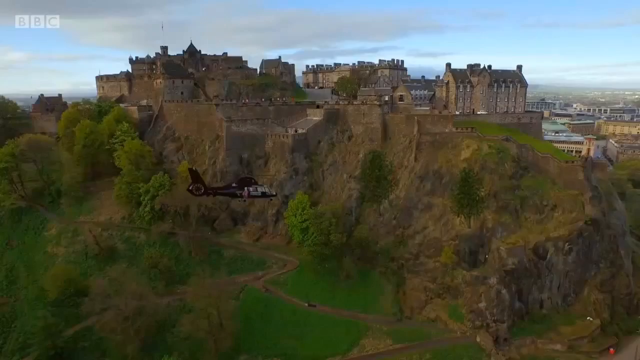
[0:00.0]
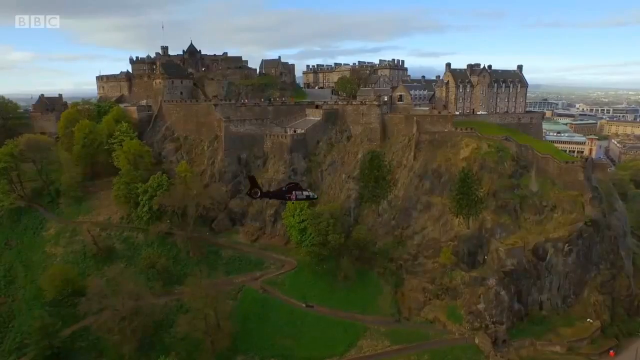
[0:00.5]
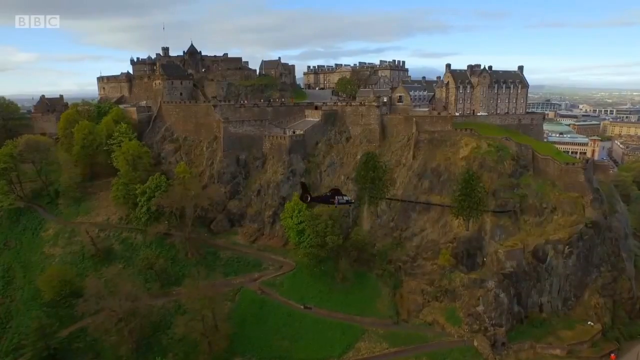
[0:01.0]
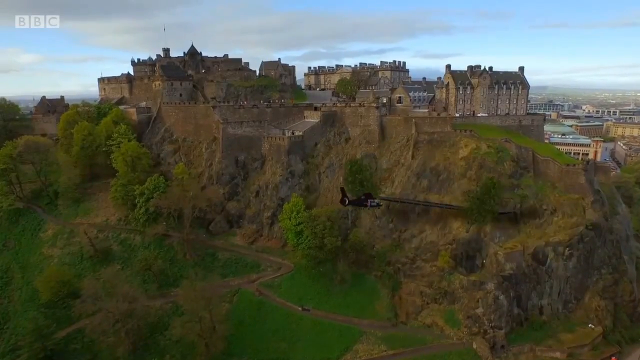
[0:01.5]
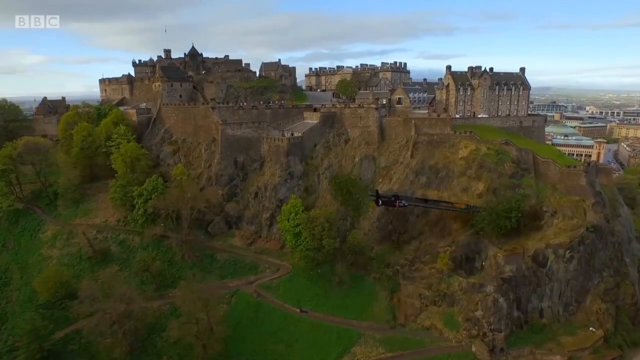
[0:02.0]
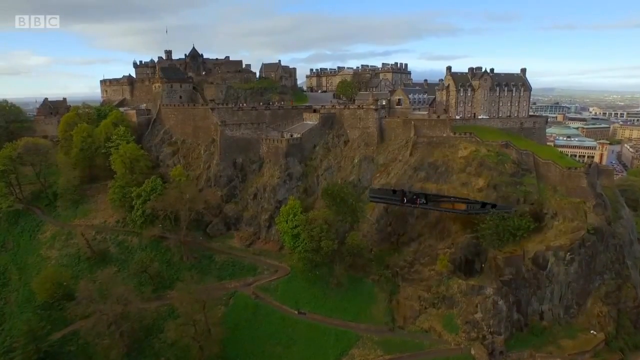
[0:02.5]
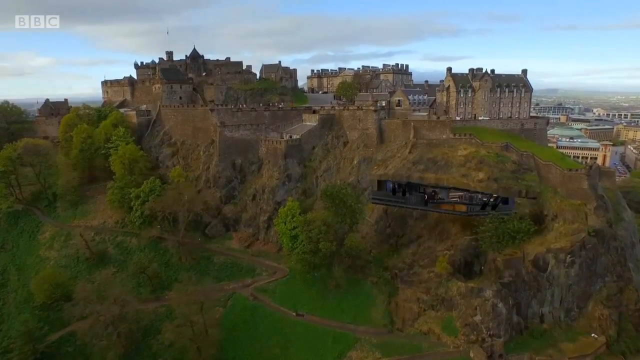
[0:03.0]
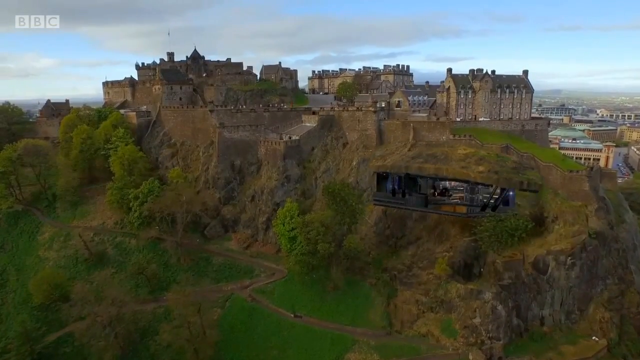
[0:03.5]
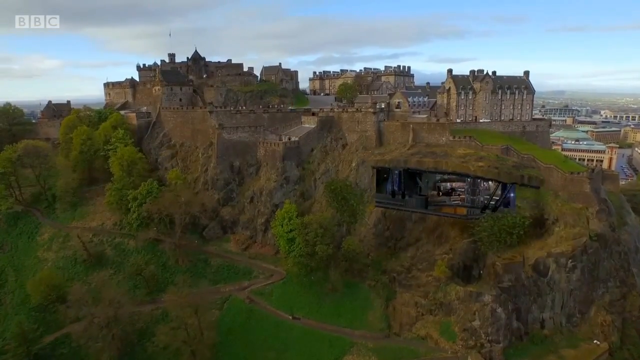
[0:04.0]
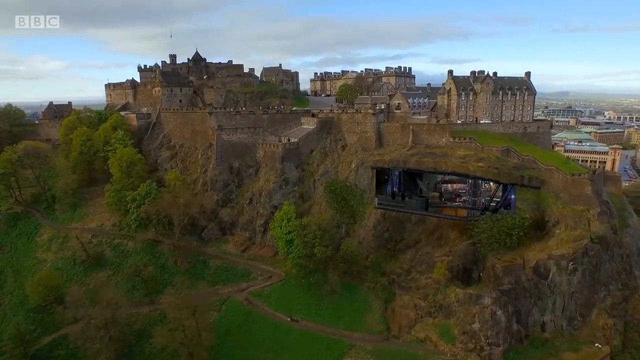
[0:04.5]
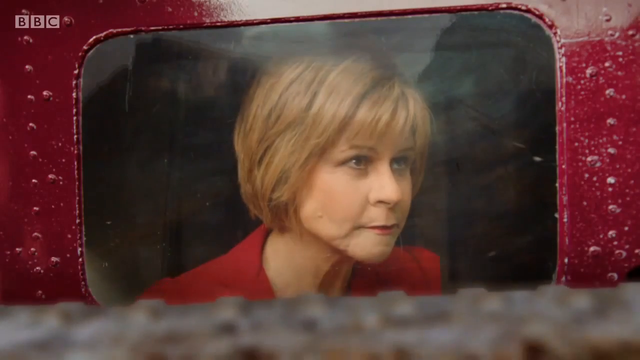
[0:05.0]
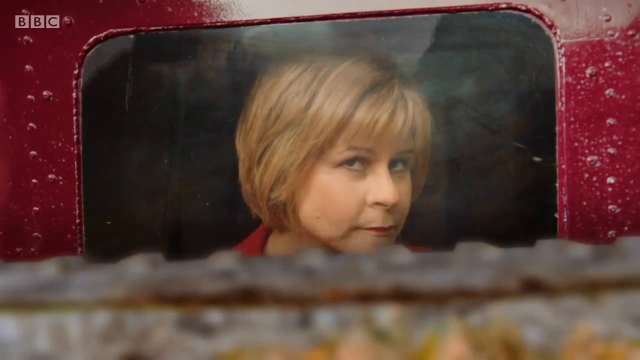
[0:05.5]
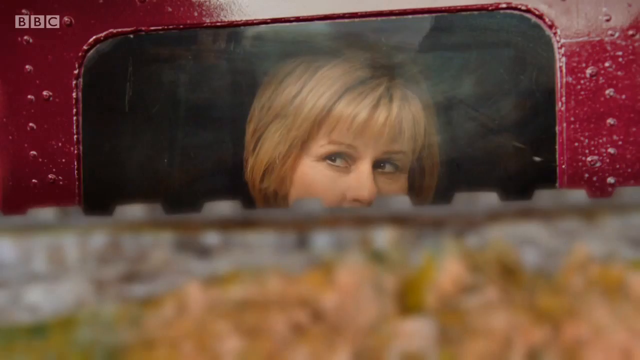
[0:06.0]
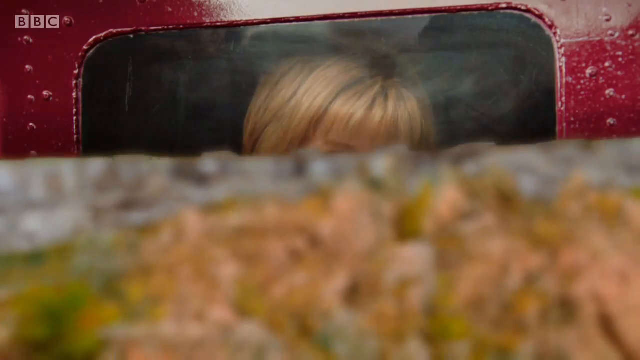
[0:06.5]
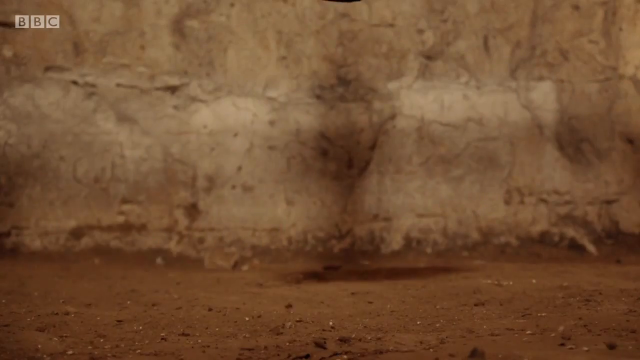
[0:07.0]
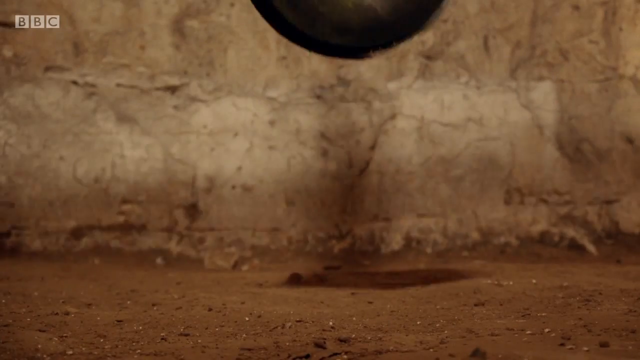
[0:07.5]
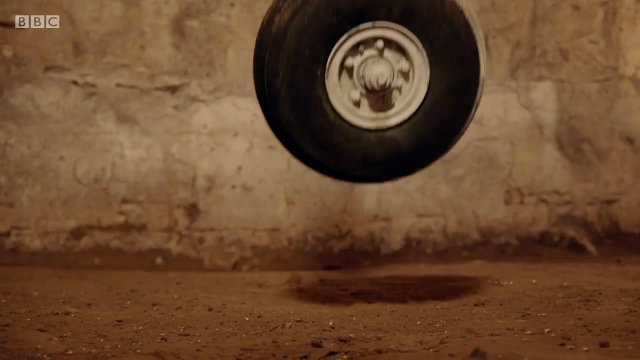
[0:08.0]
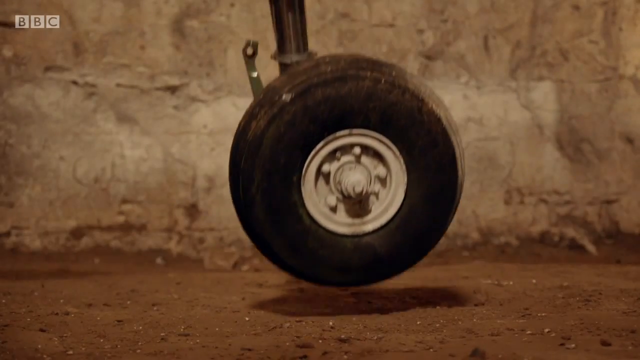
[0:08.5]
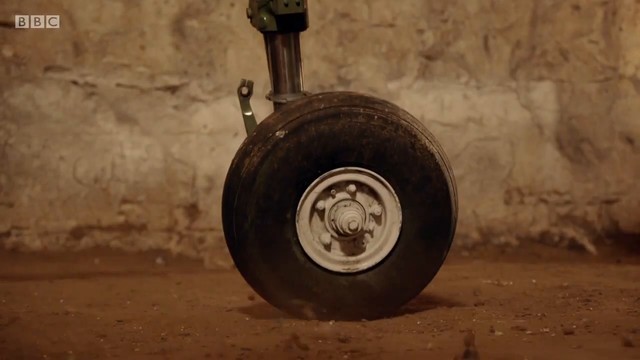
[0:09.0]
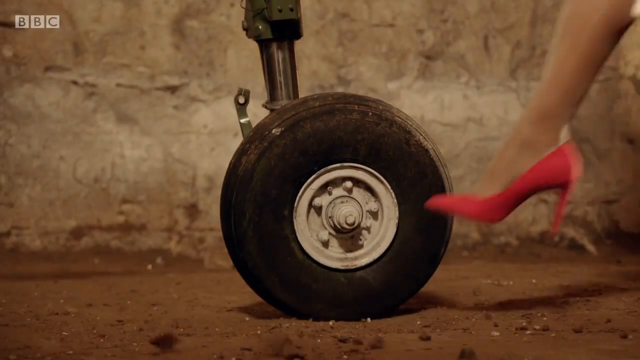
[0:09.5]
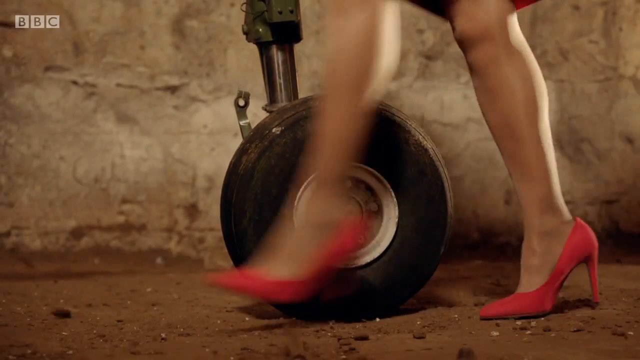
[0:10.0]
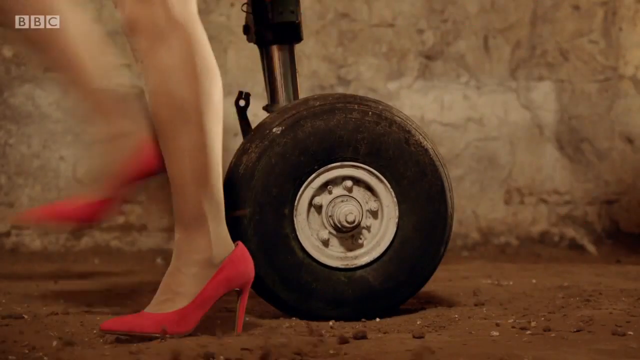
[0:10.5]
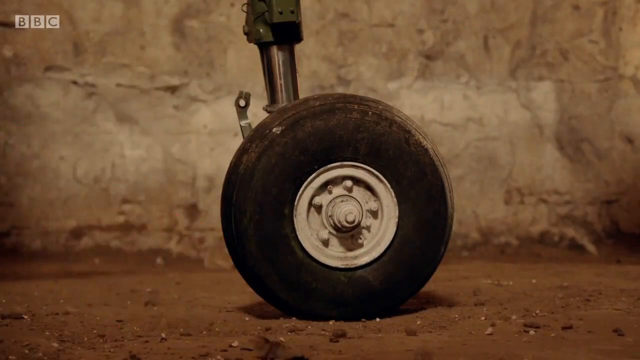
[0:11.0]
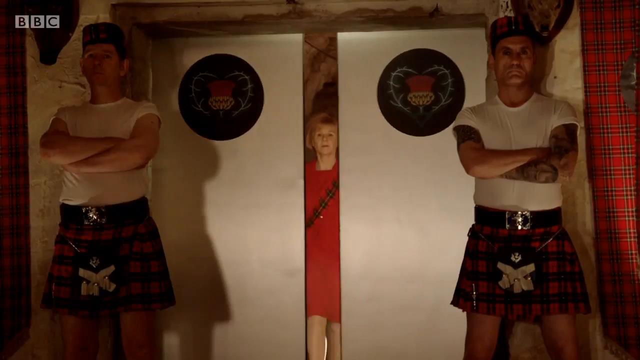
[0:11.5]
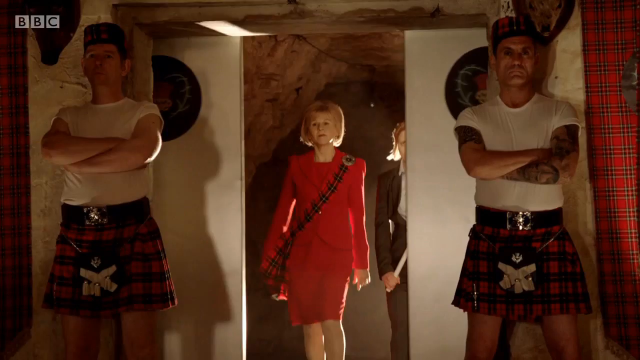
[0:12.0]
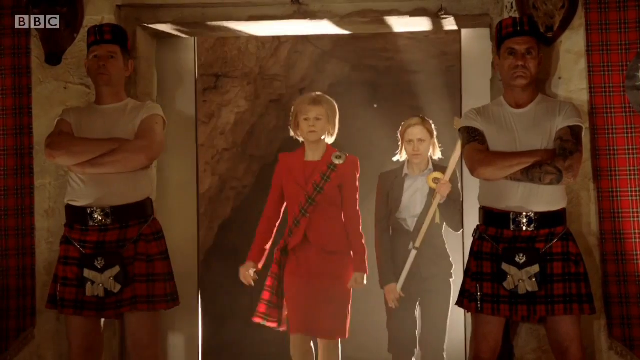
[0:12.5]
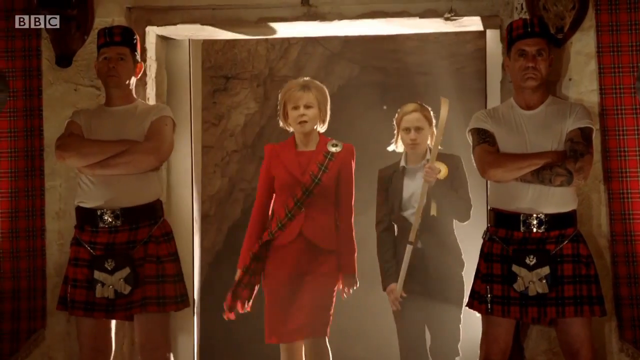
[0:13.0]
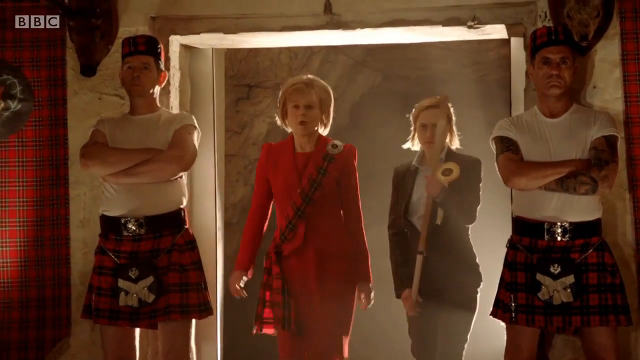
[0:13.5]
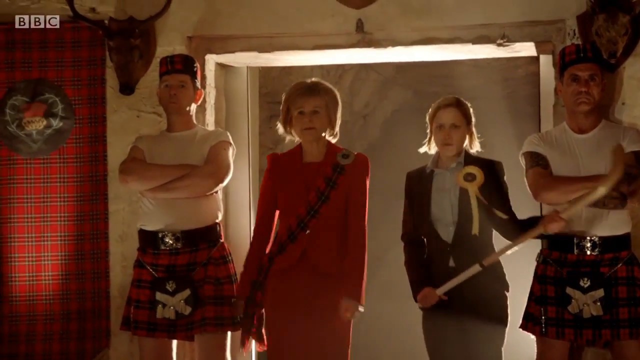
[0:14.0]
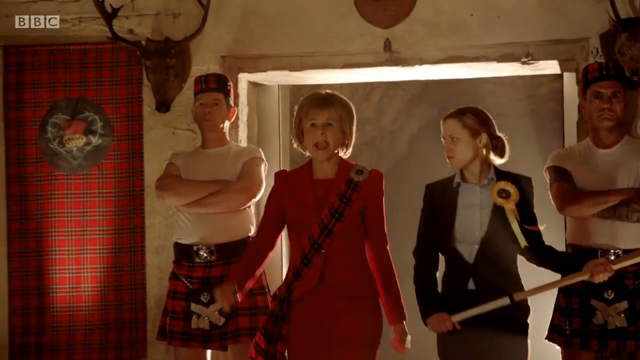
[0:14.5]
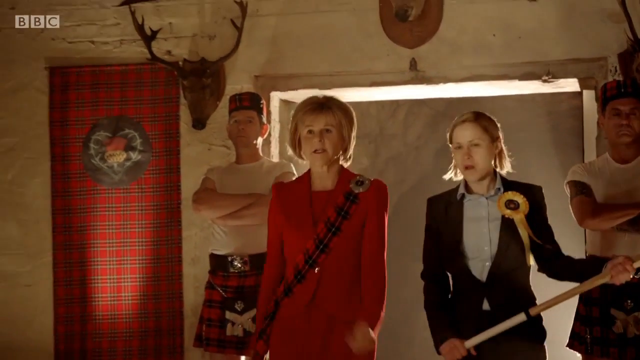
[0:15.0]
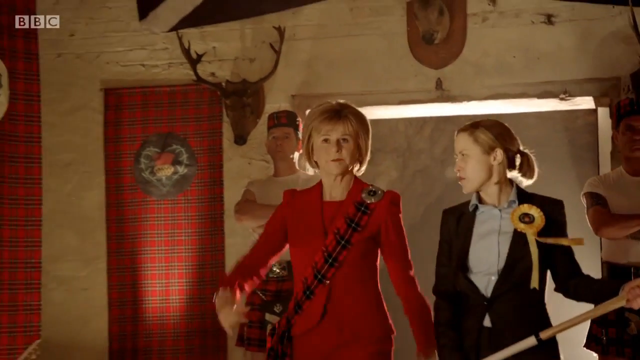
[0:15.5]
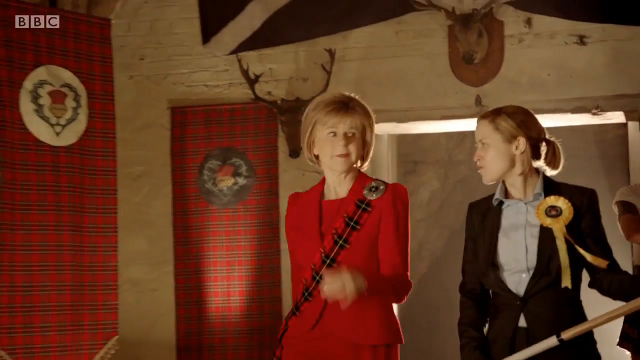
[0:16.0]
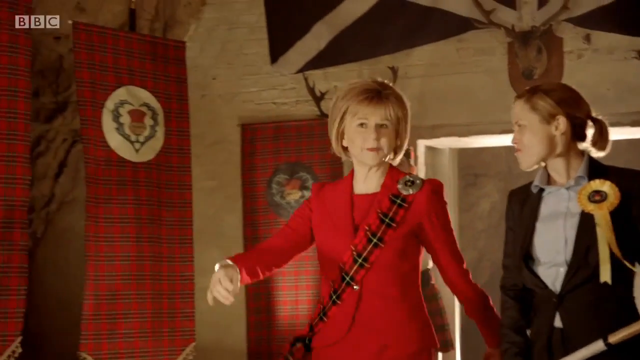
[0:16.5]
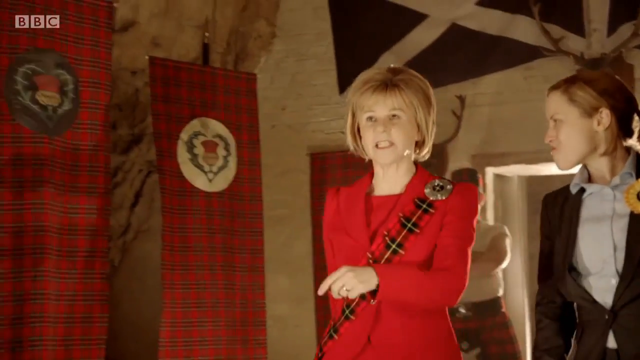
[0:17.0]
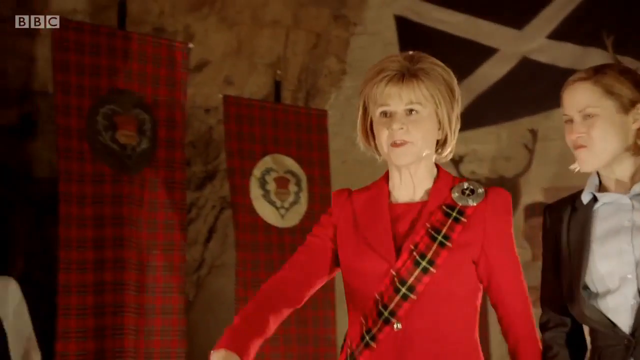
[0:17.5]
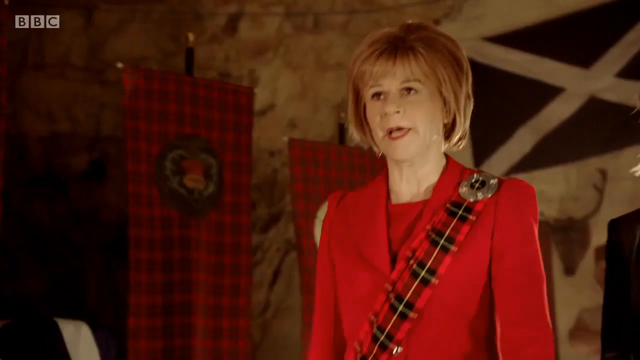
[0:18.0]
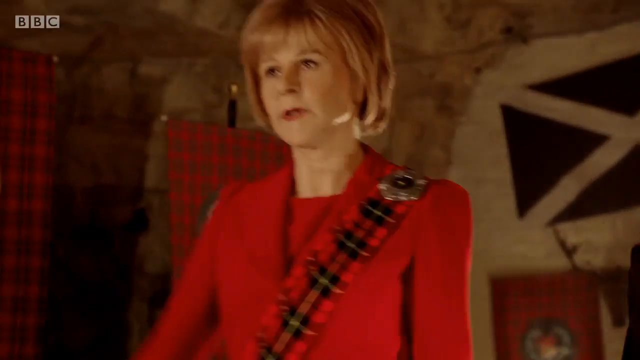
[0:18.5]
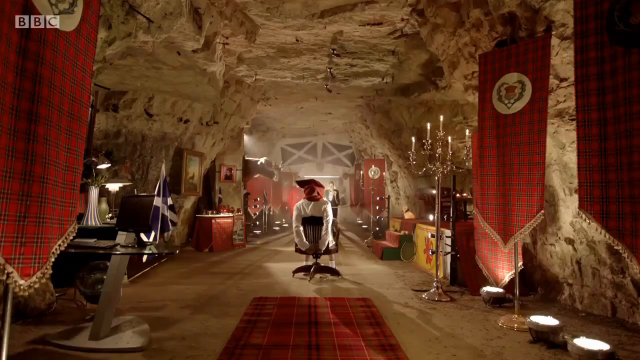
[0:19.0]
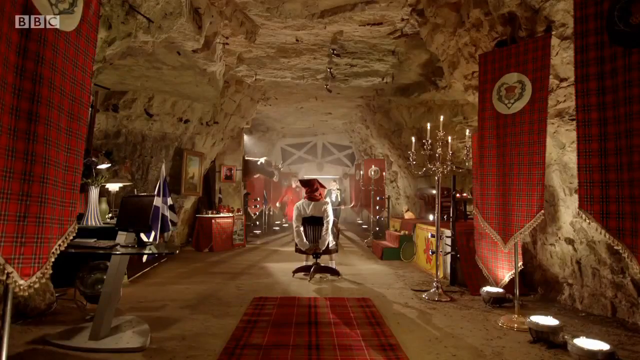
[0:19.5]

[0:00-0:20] A black helicopter flies from the left side of the frame to the right. It approaches a rocky wall with brown buildings above it. As the helicopter nears the wall, two rather tall trees move, allowing an opening and letting the helicopter enter the mountain. The helicopter then lands, and two women are seen entering a building through a gray sliding door. On both sides of the door, left and right, there are two men wearing red and black kilts. The women walk along a long corridor with rocky walls and approach a person whose face is covered by a hood and who wears a white shirt. This person is tied to a black chair. One of the women wears a red dress, while the other wears a black jacket and a light-colored shirt.